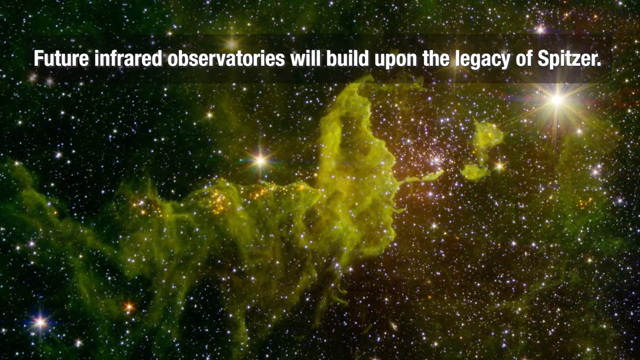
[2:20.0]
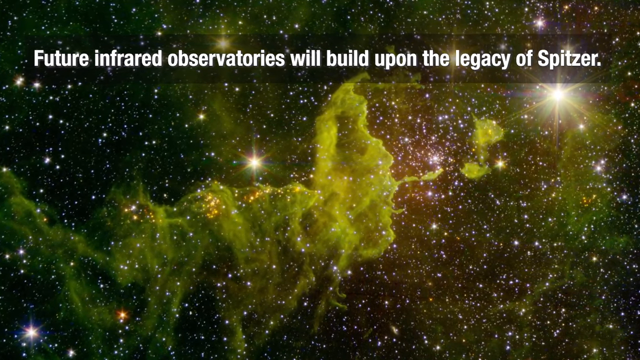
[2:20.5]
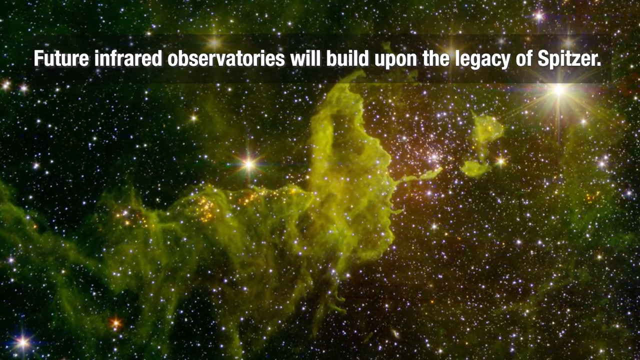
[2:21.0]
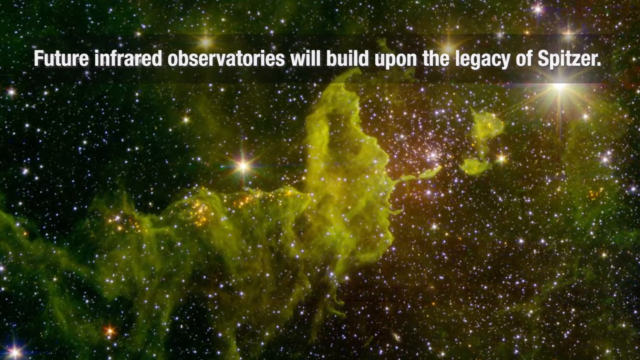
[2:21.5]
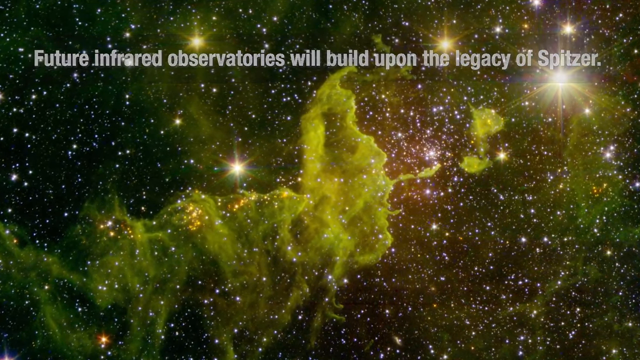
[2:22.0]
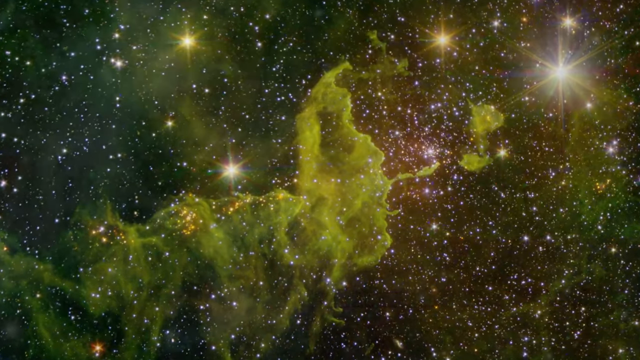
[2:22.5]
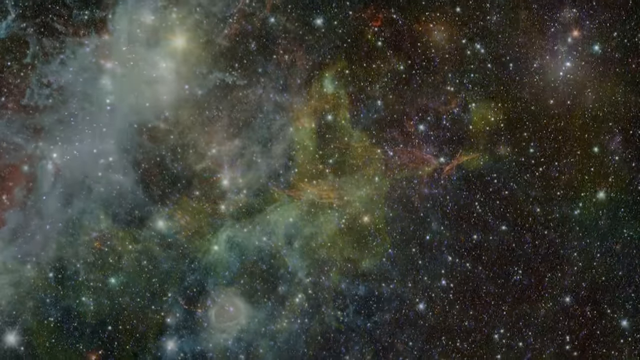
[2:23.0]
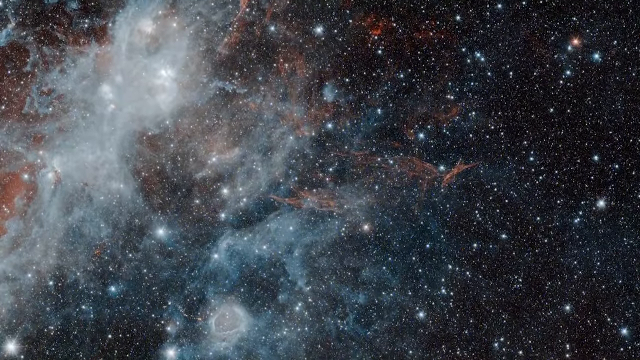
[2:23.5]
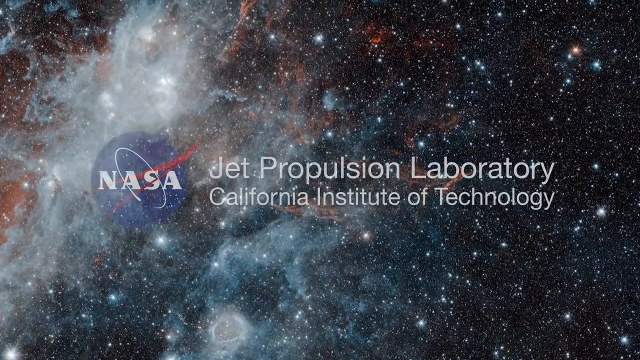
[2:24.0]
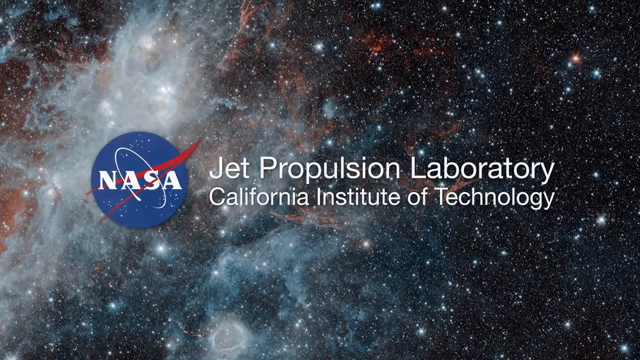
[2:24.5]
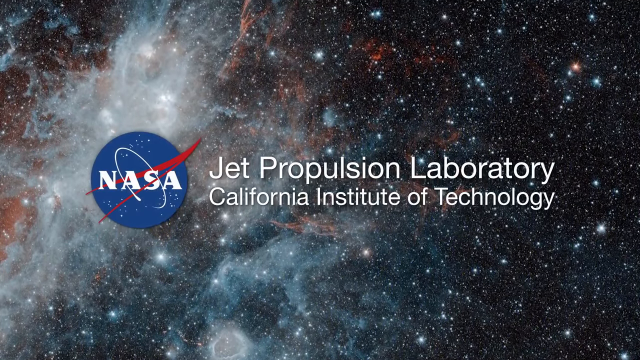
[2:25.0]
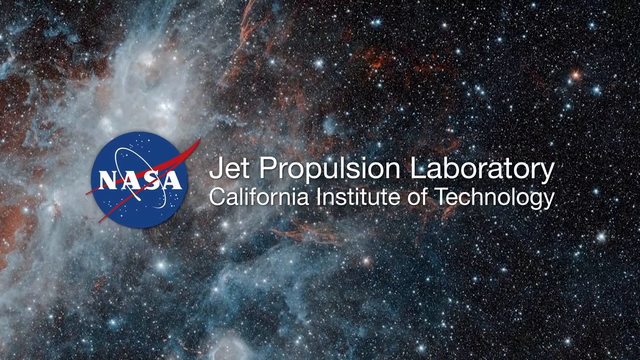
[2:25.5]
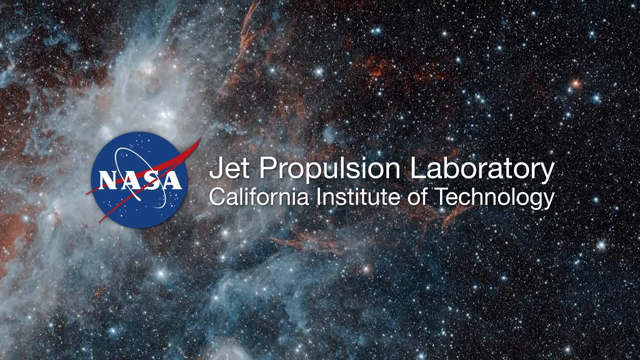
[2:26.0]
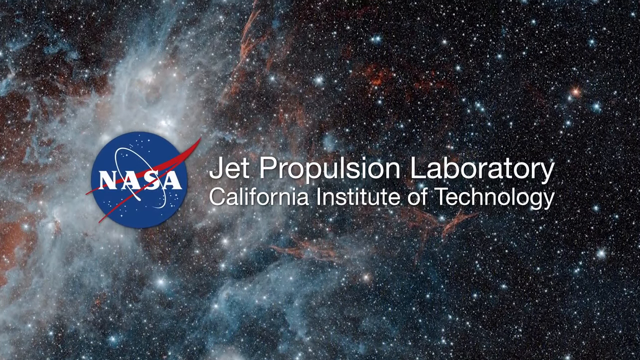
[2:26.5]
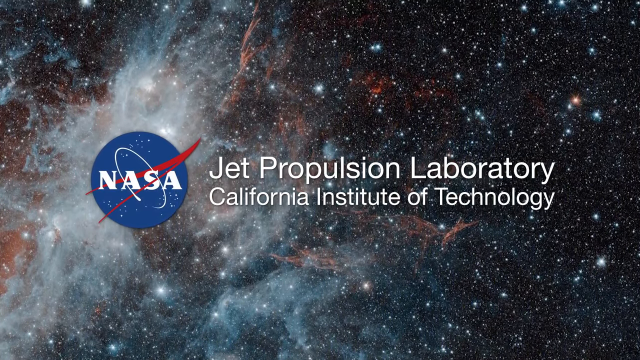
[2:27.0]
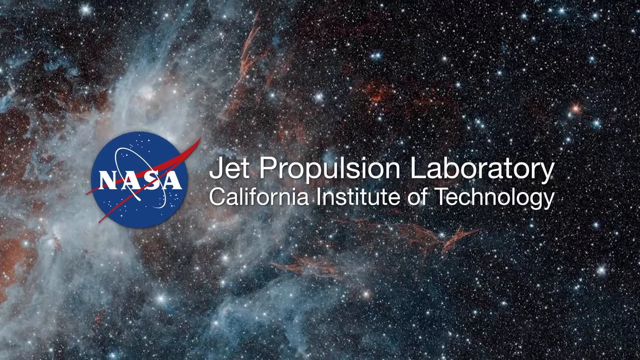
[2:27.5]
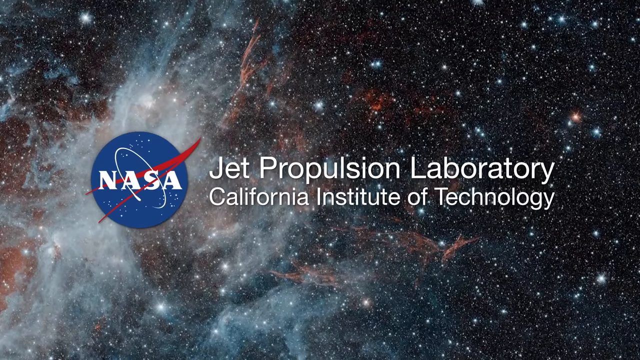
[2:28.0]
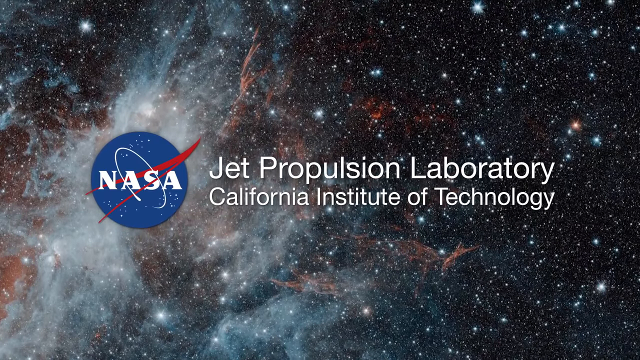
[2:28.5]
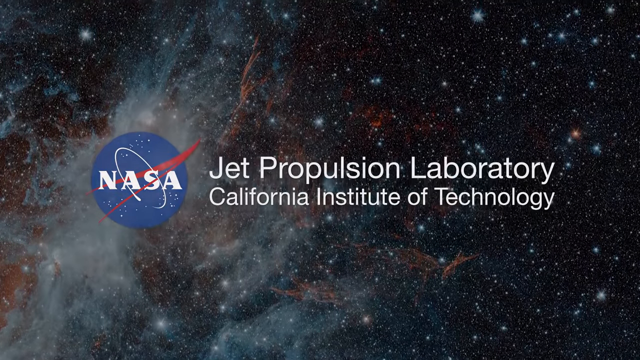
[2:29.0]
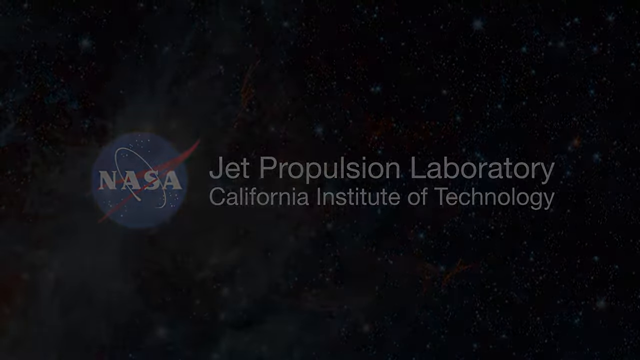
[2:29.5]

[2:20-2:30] A computer-generated scene, apparently of outer space, shows twinkling stars, black space and a galaxy that is kind of green and slimy looking. The camera kind of turns a little, and a different computer-generated animation follows, still in outer space, with white galaxies and white twinkling stars. The camera moves from down to up, and the text "Jet Propulsion Laboratory, California Institute of Technology" appears on screen. To its left is a NASA logo: a blue circle with white dots representing stars, the word NASA, and something like a red A-shape running across it.